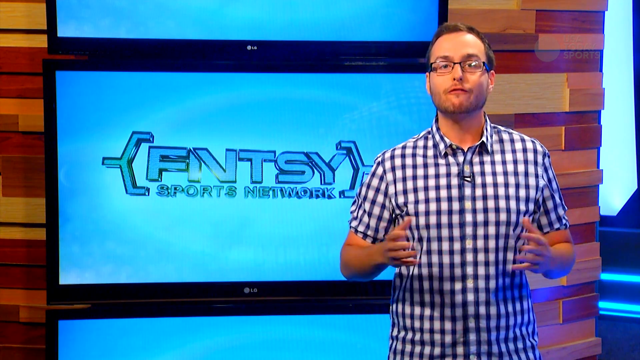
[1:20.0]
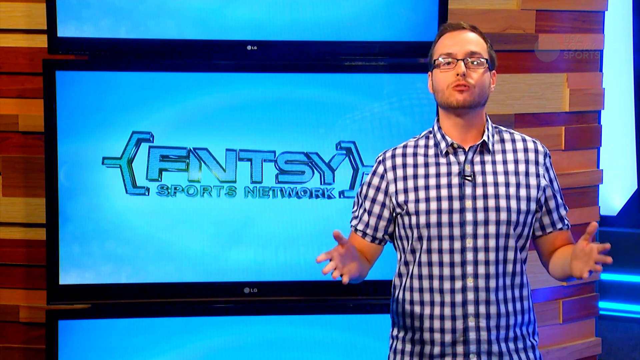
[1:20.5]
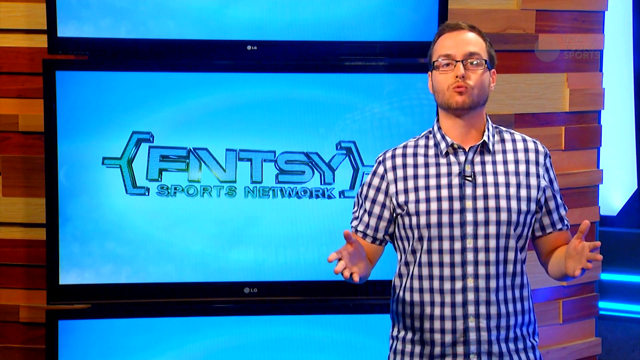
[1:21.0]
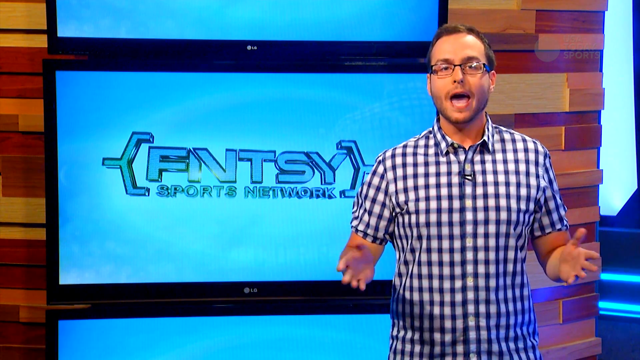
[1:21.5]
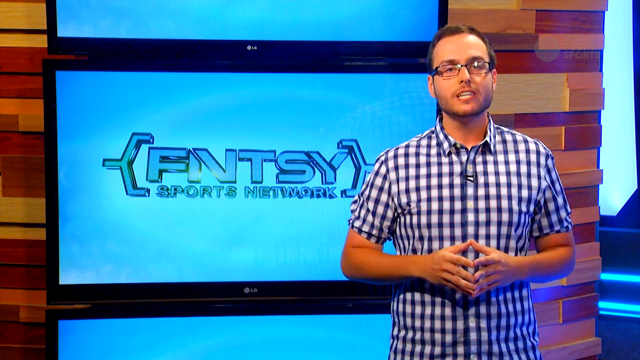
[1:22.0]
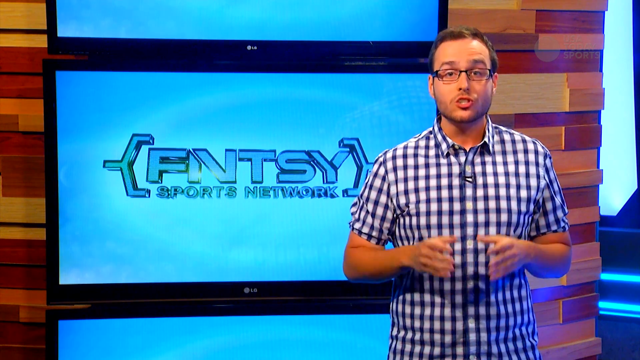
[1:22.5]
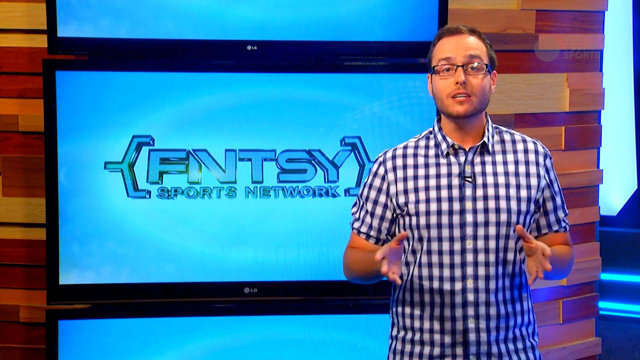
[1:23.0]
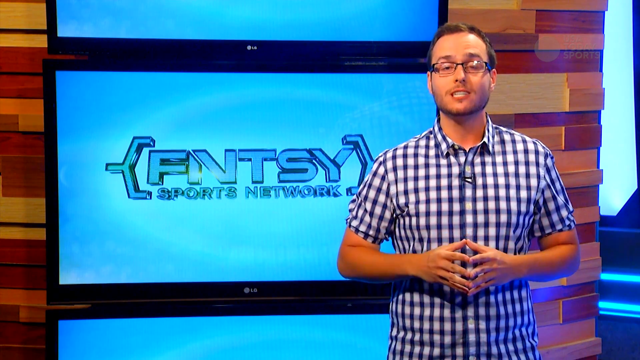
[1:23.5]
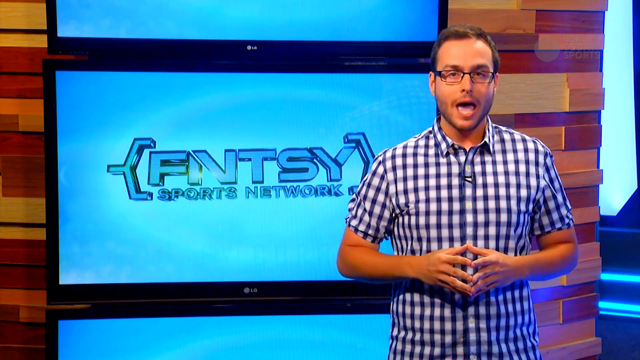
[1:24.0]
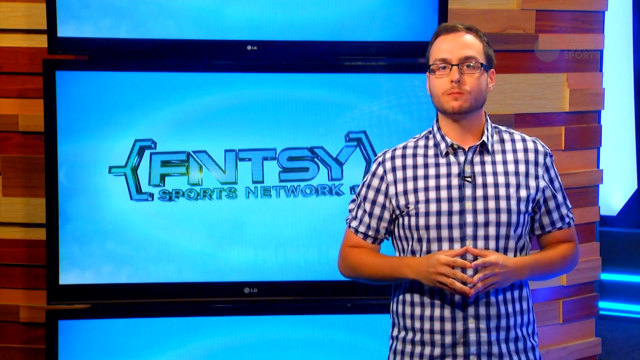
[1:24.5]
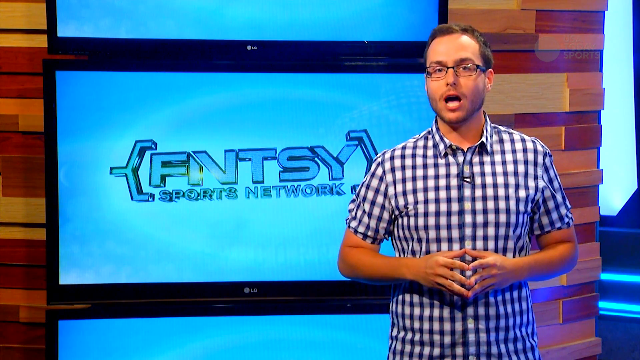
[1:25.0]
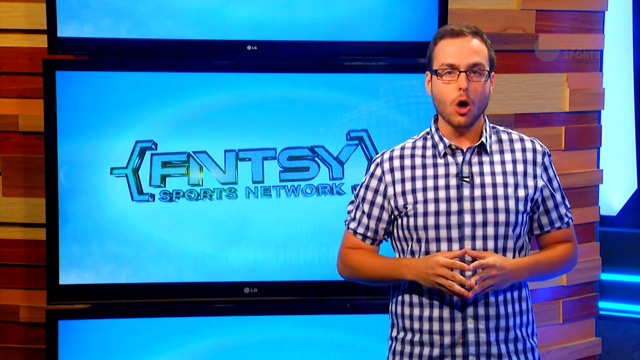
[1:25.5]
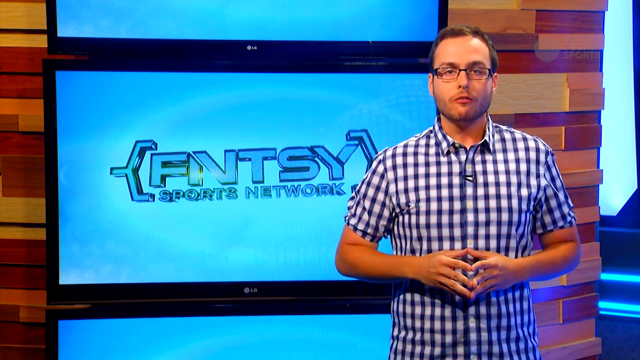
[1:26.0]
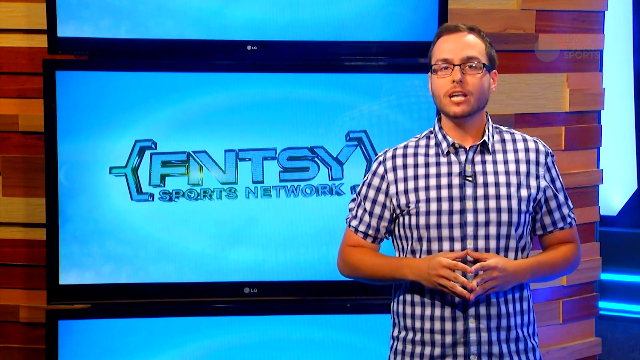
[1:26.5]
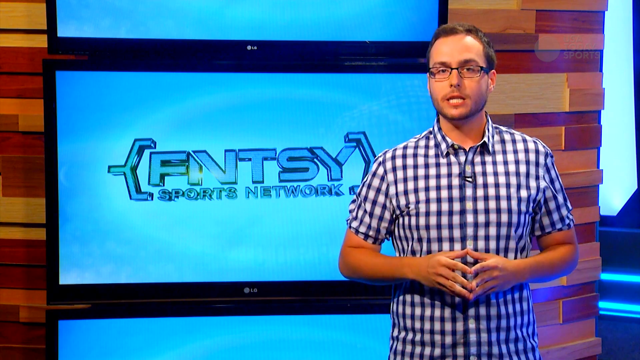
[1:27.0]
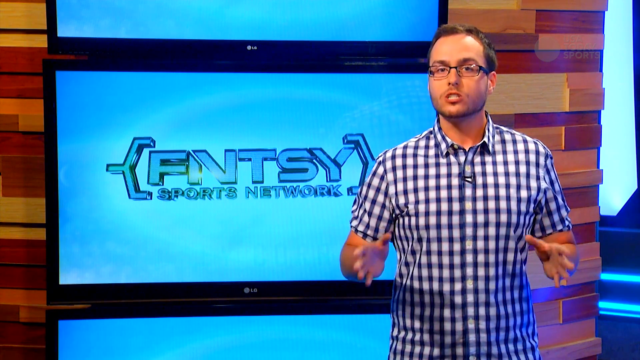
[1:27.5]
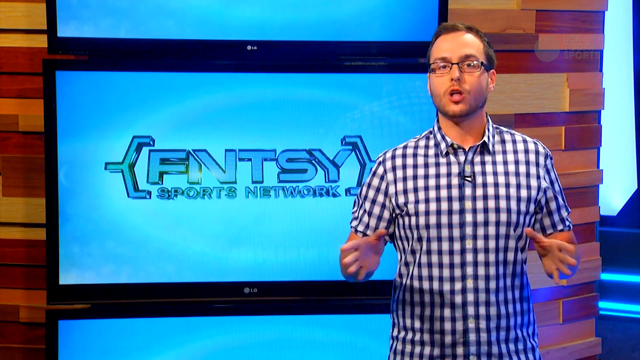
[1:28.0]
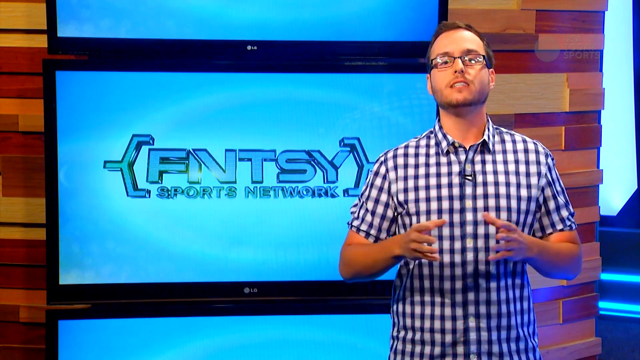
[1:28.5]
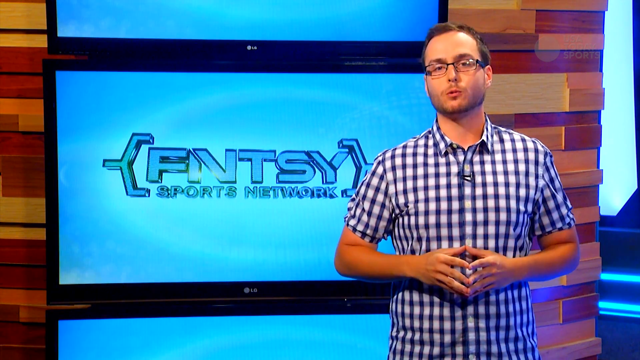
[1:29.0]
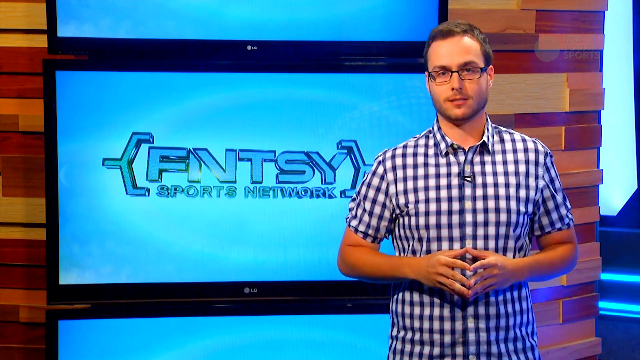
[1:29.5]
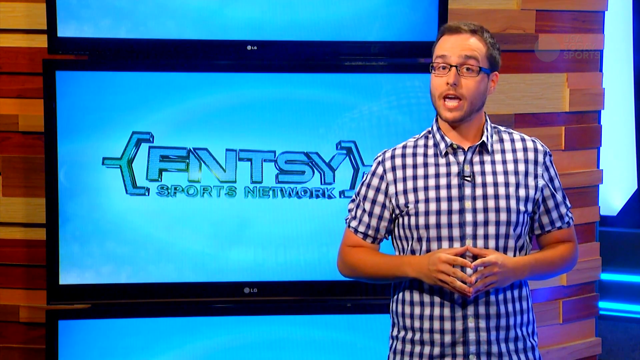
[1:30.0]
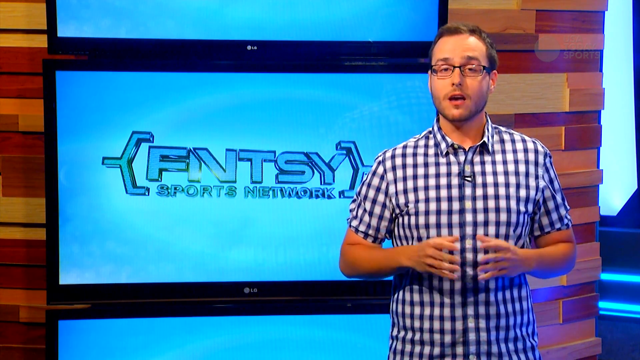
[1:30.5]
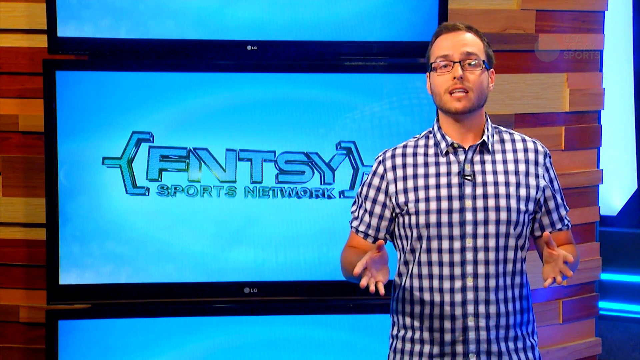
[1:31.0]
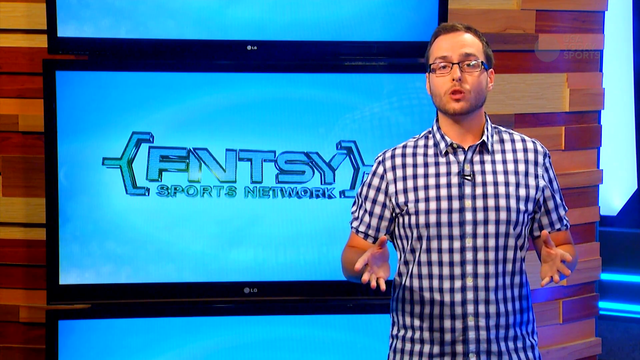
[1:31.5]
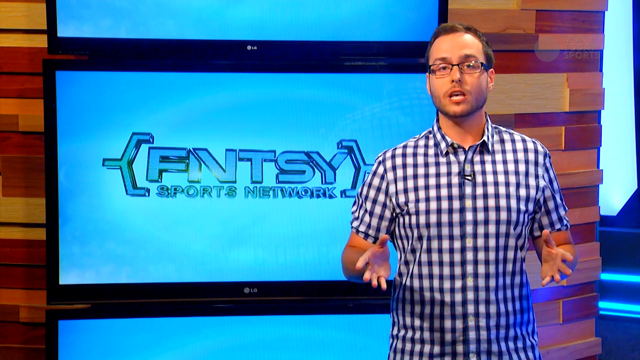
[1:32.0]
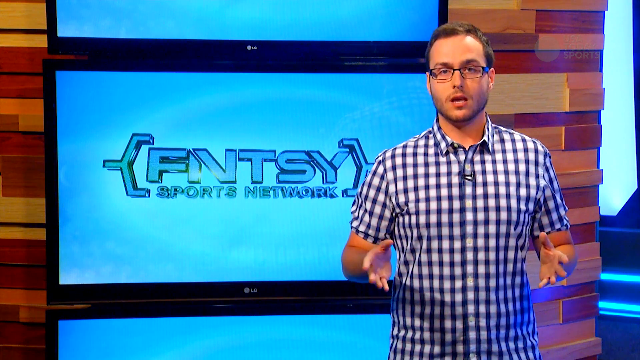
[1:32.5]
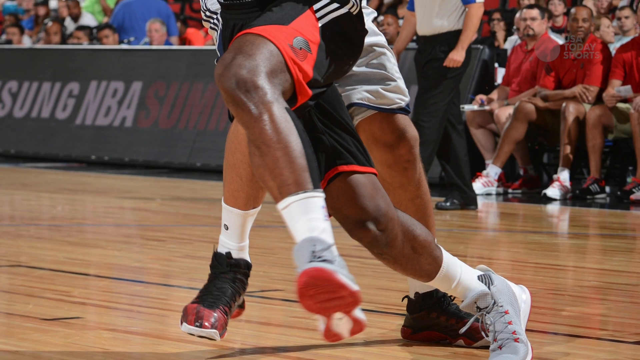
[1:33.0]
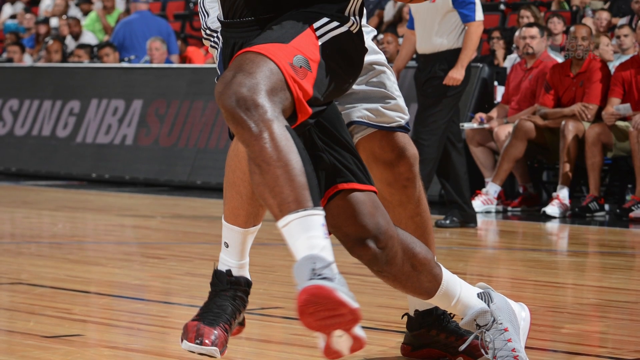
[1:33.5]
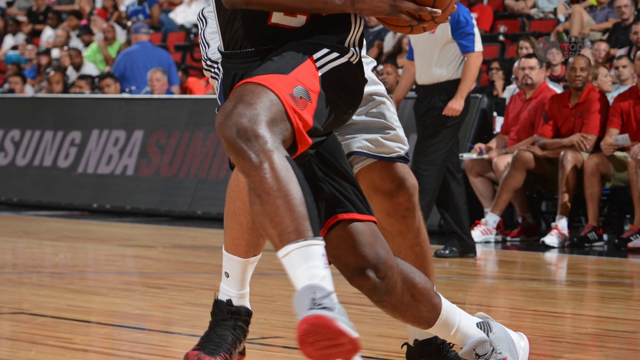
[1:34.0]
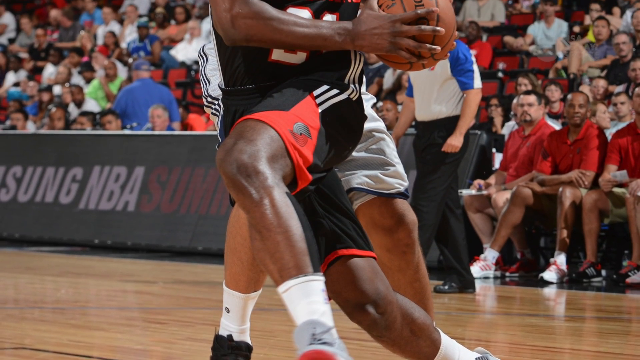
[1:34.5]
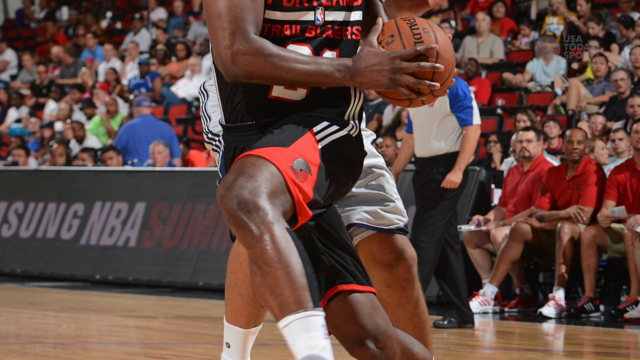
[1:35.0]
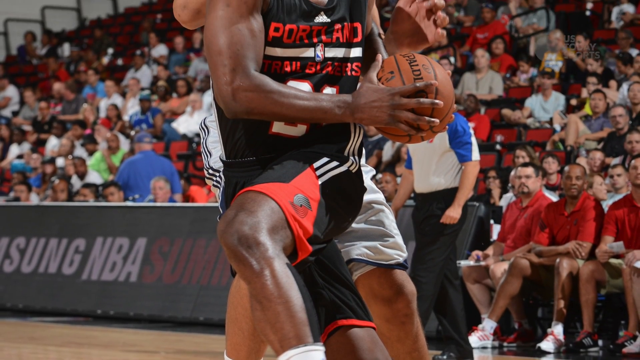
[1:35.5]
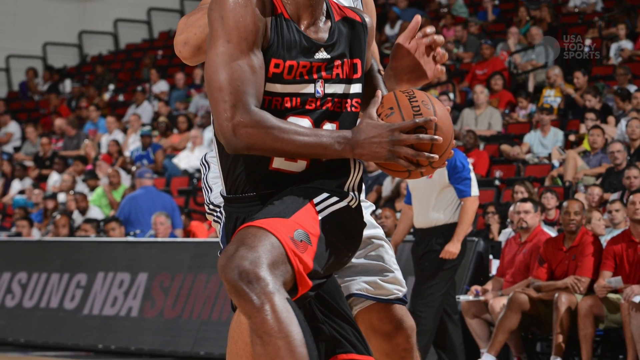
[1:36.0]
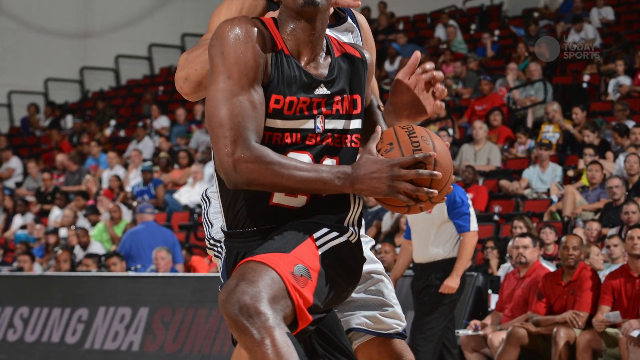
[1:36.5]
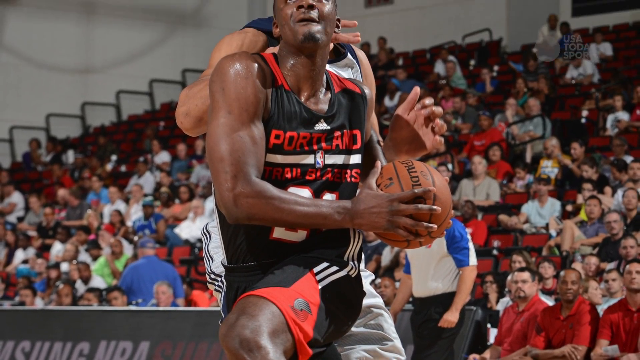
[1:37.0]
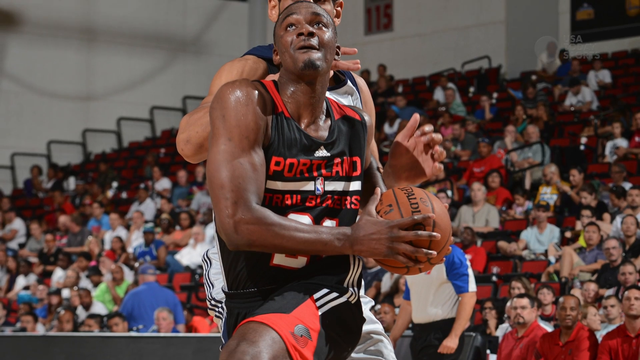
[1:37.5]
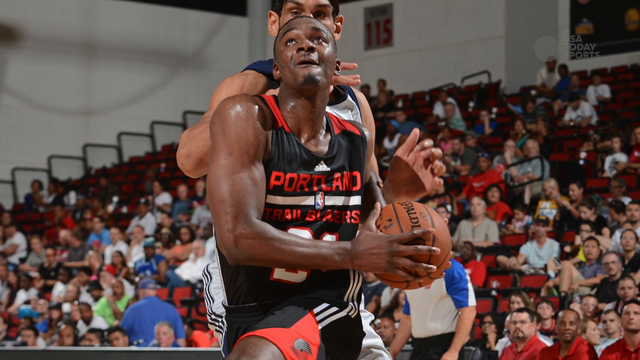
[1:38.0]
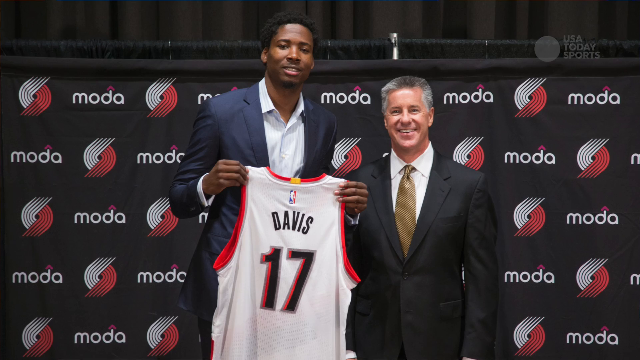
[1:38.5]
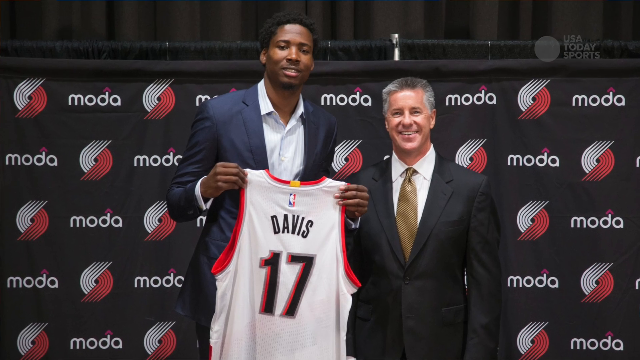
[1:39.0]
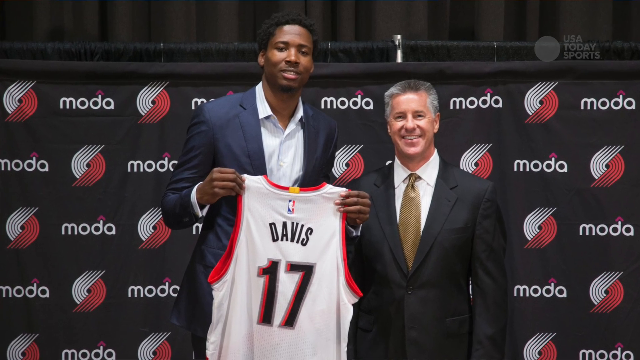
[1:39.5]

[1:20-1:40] A sportscaster is in front of a very vibrant blue screen that says "fantasy sports network," with fantasy abbreviated as "FNTSY." He wears glasses and a plaid shirt, looks at the camera and talks with his hands, touching fingertips to fingertips and thumb to thumb, then spreading his hands apart and putting them back together, alternating. A black and red team plays. Very brief clips flash by quickly, including someone holding a white jersey that says "Davis." The game with the black team is fast. The taller player appears with a coach, and then the video returns to the sportscaster.